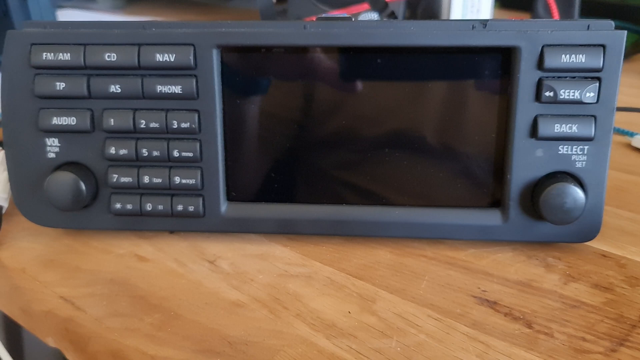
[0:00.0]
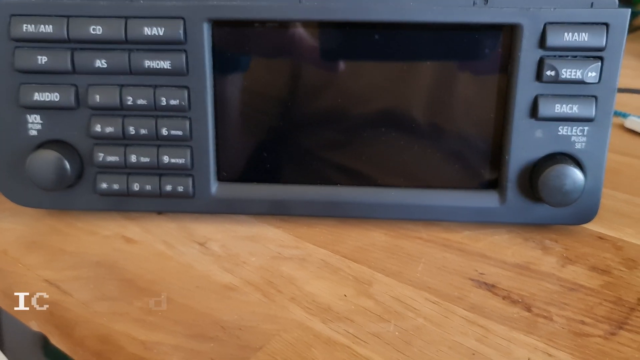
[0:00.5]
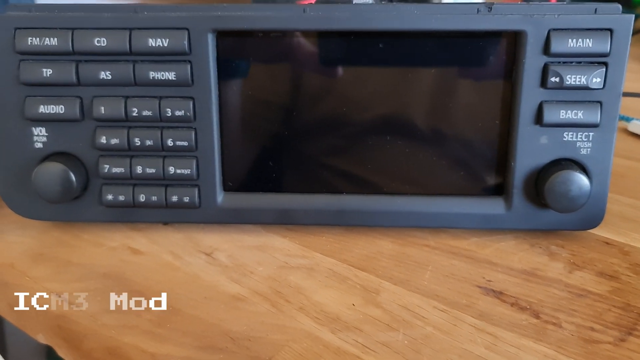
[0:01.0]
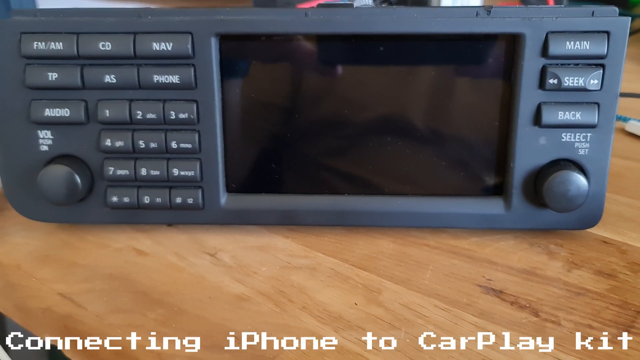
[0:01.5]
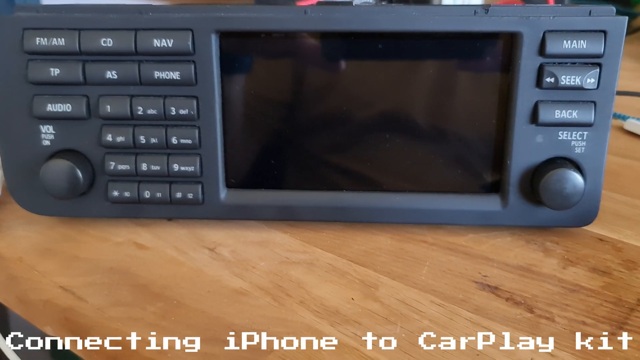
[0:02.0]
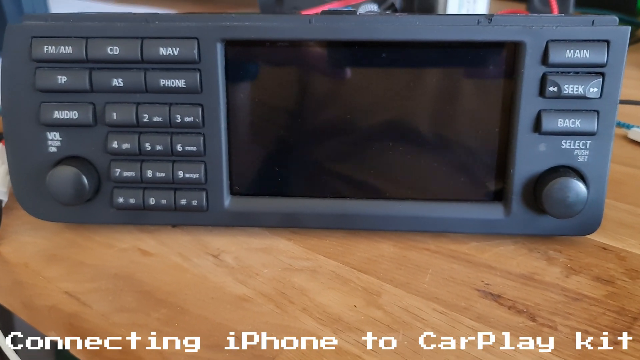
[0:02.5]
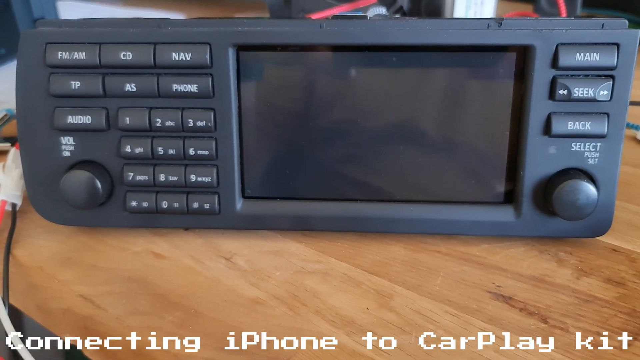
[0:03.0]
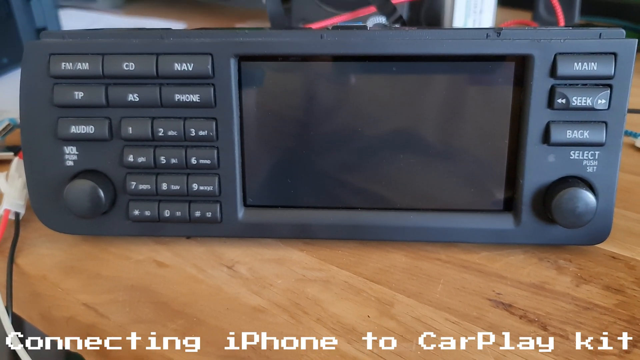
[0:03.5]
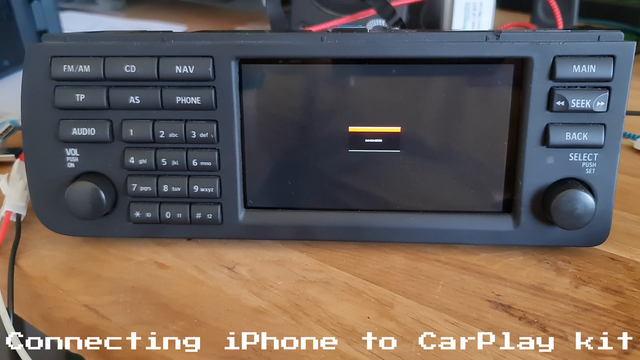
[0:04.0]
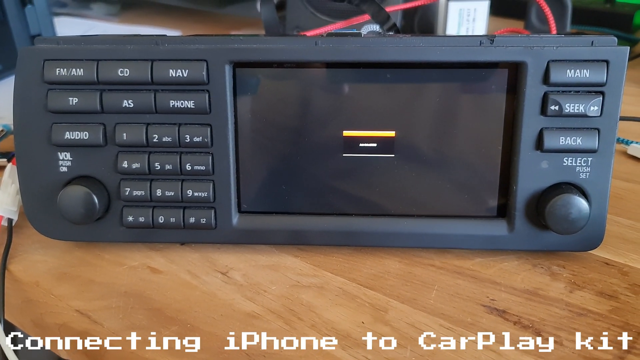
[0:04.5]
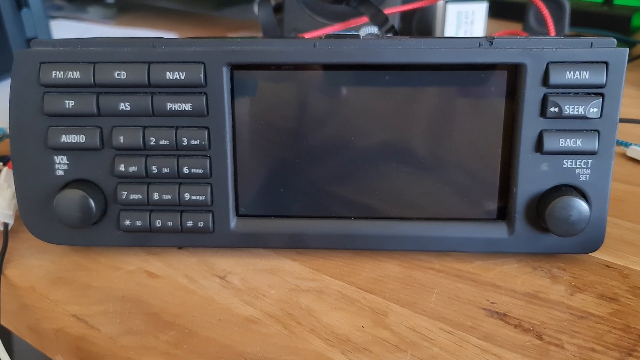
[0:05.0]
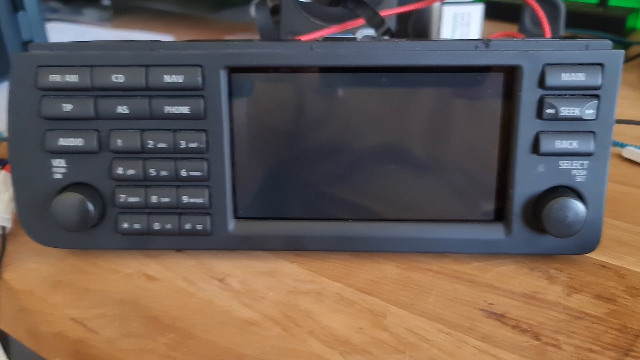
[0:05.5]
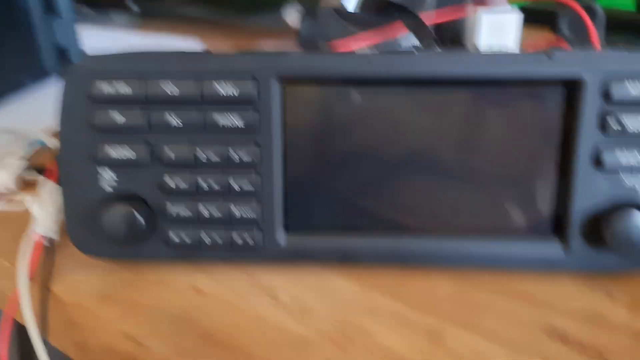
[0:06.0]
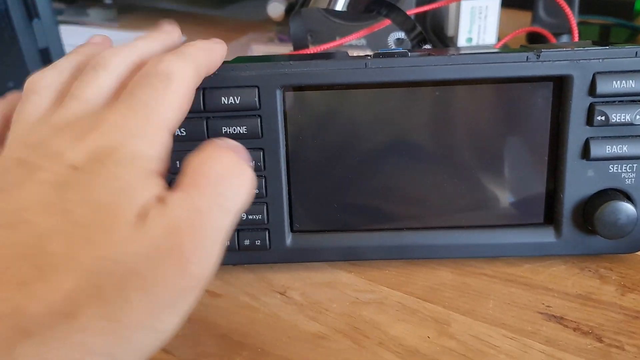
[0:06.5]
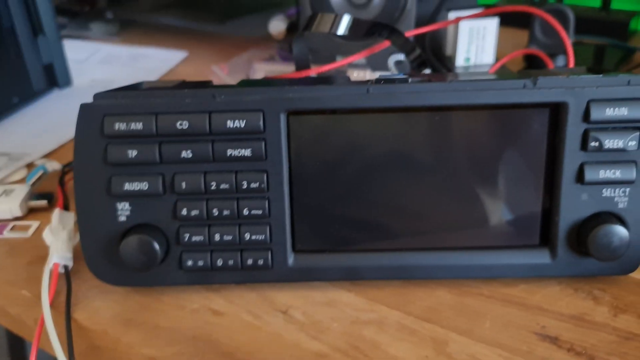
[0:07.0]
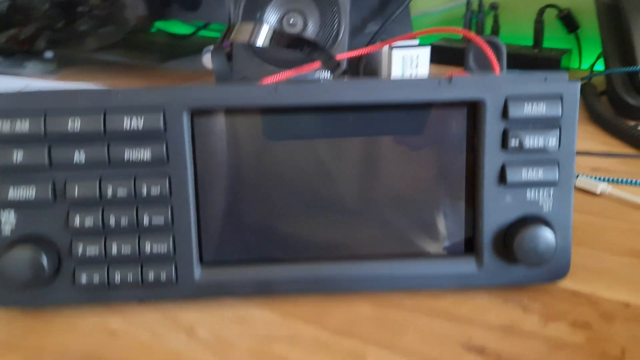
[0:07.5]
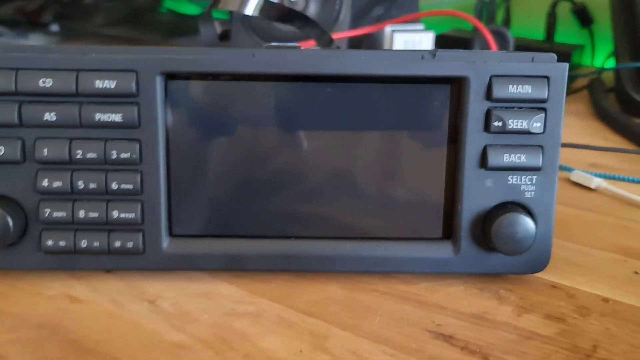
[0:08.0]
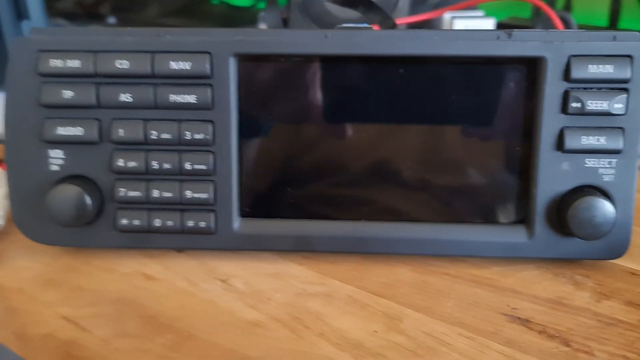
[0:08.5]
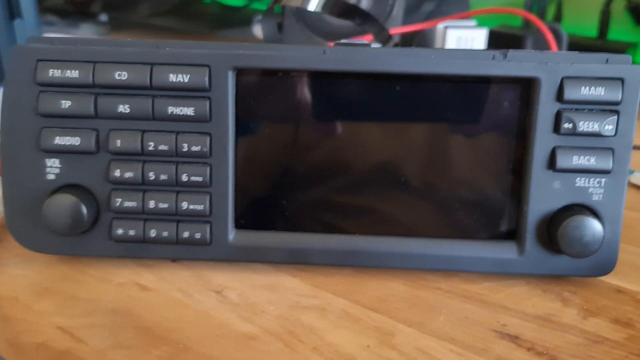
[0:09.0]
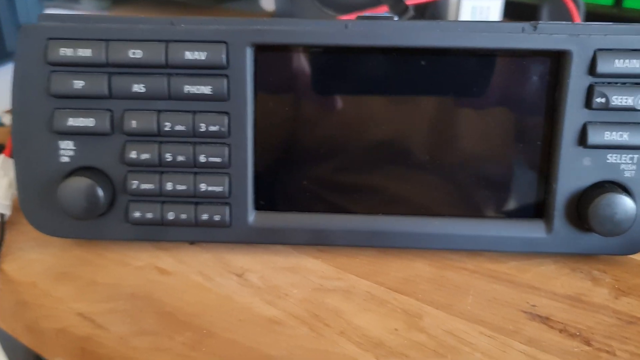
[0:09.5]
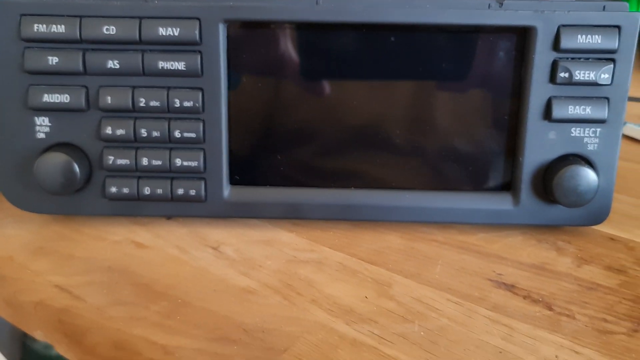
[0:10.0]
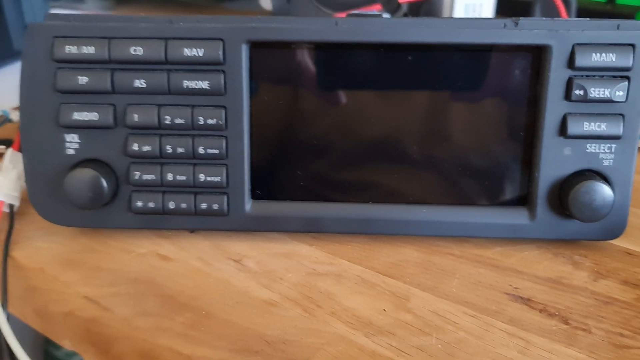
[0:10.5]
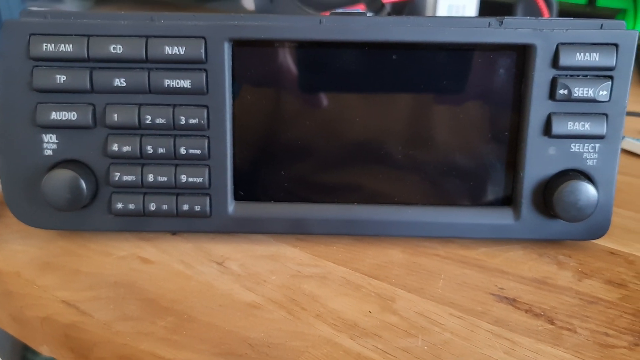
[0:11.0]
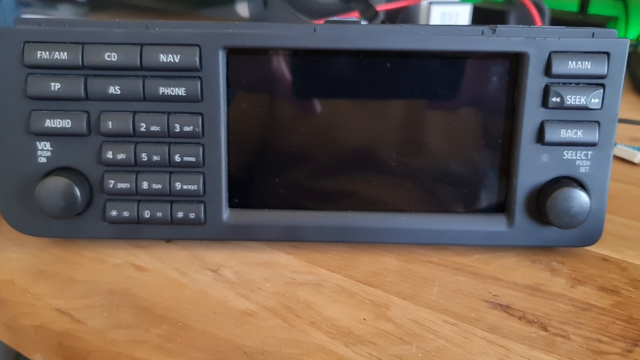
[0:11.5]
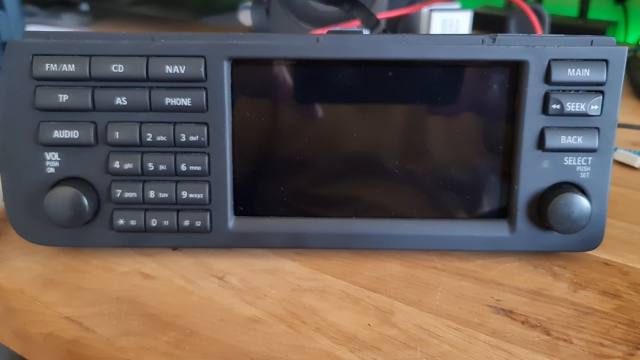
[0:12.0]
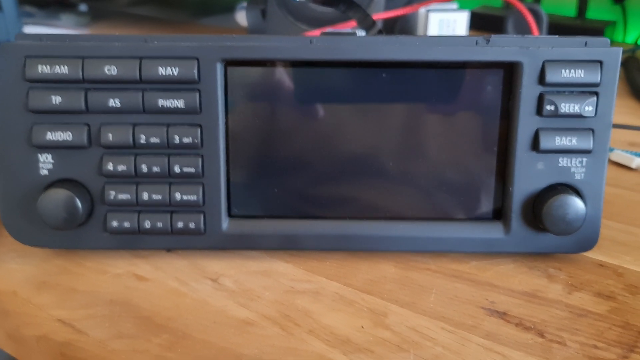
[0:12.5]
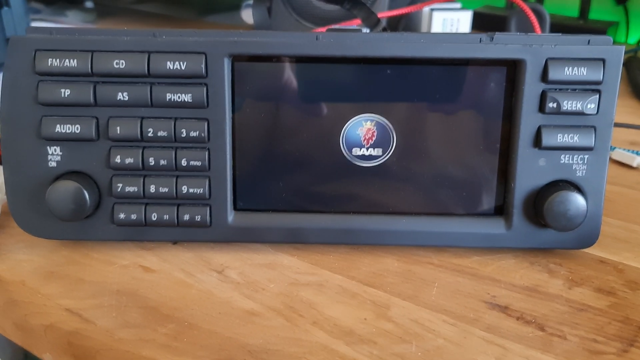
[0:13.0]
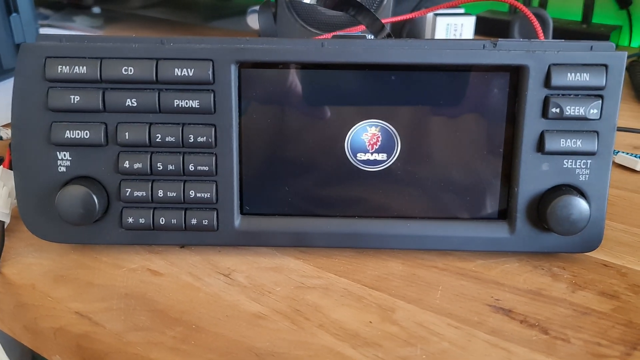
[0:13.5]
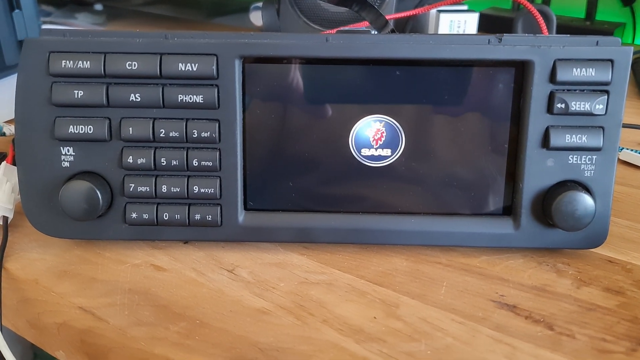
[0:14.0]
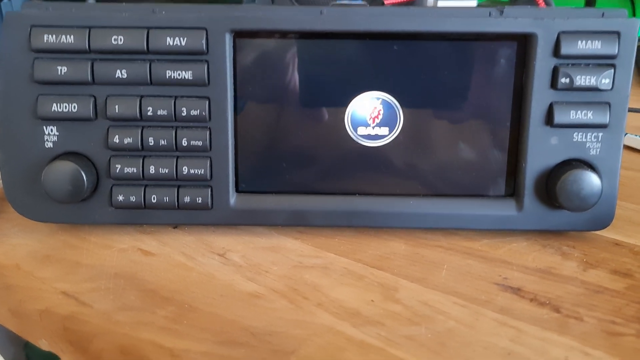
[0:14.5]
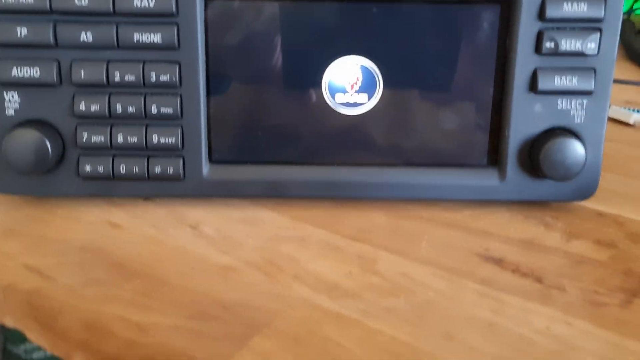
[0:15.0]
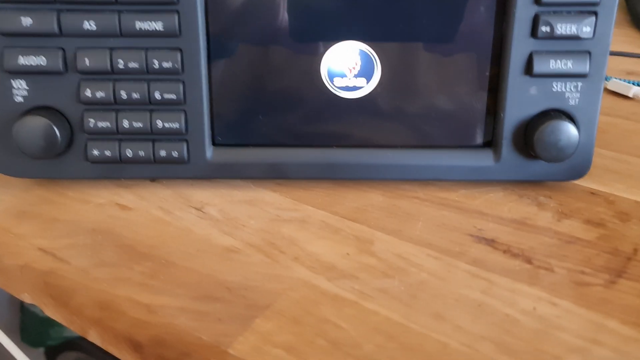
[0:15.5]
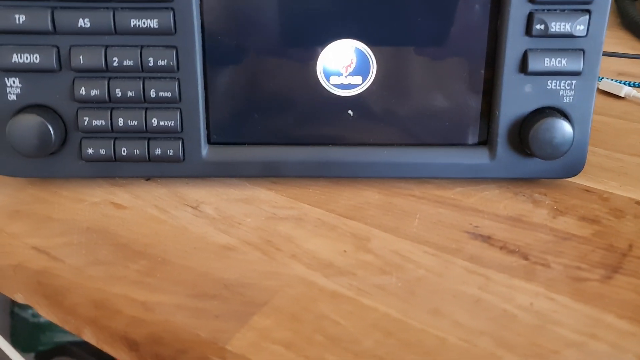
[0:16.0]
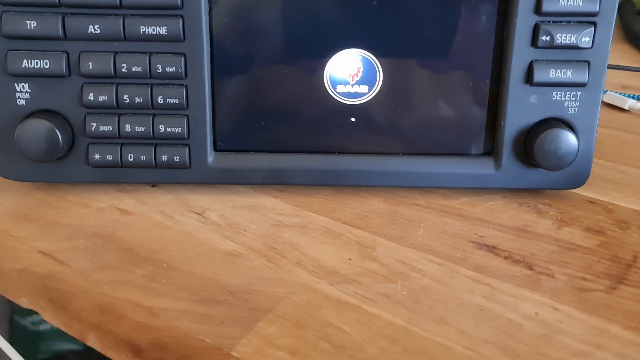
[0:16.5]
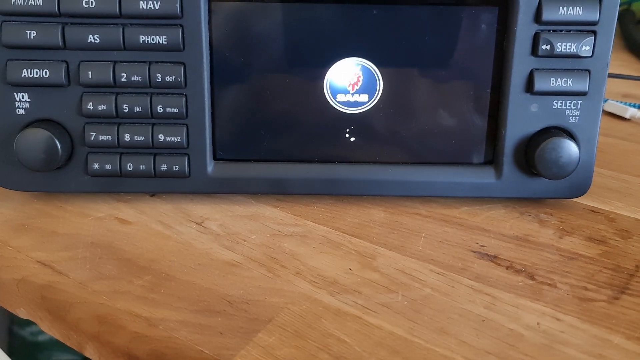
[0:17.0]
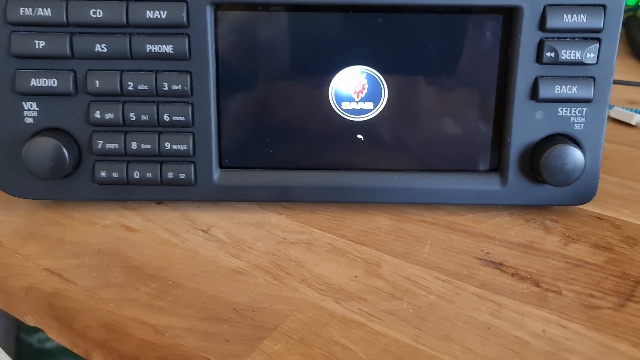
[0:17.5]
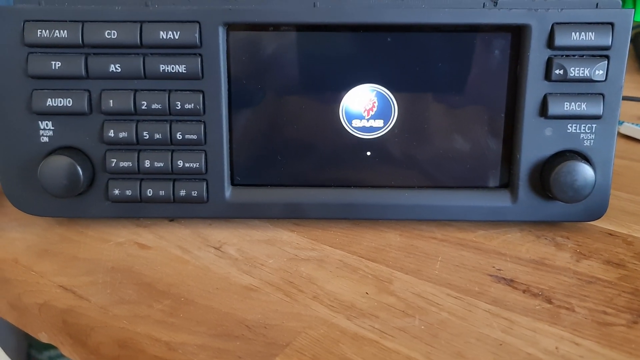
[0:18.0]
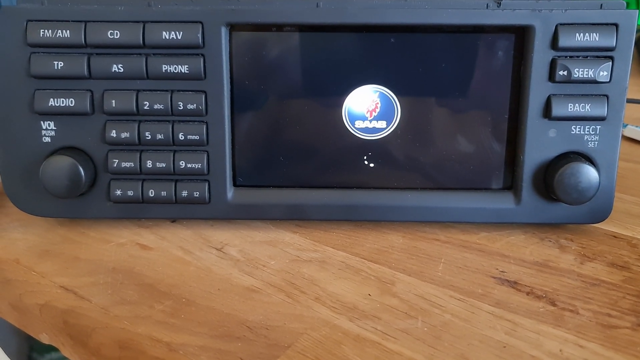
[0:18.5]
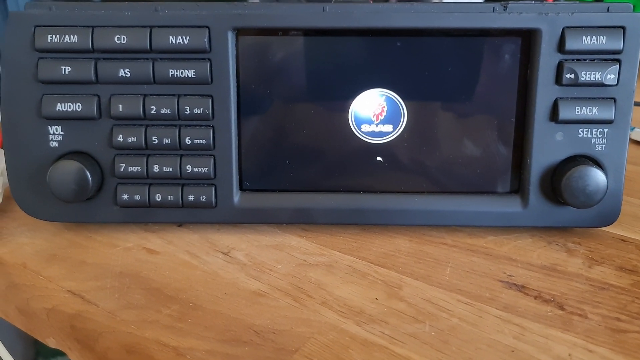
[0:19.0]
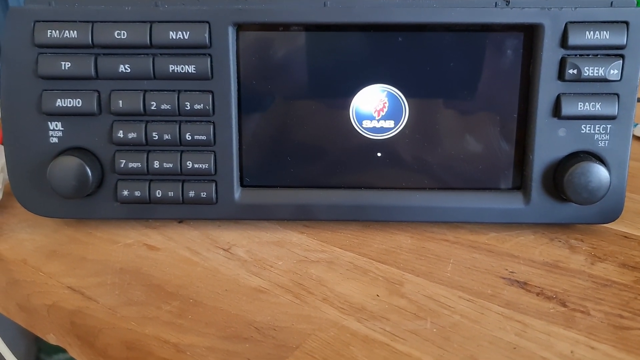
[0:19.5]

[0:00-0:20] A car audio device, a car radio that has been taken out of a car, is shown. Apparently someone is carrying out a technical procedure to connect an iPhone to the car radio. When the radio starts up, a Saab logo appears, so the radio probably comes from a Saab car, and it then starts loading. The radio has a non-standard format, probably made specifically for the Saab car. Some wires stick out of it from behind. About half of the front is taken up by a screen showing the Saab logo loading. The radio has a bunch of buttons for selecting different functions: FM, AM, CD, navigation, TP, AS and phone. There seem to be two turning knobs. There is a dial pad with nine numbers plus a star and a hash symbol, and there is an audio button.